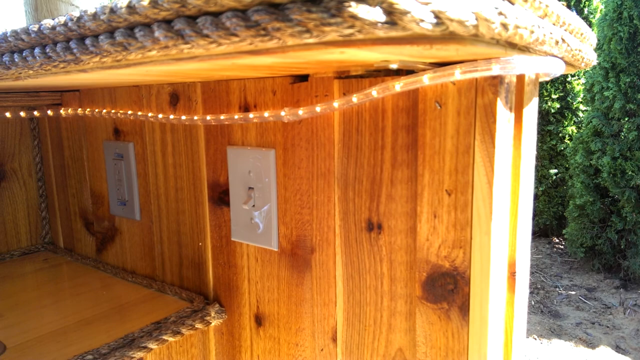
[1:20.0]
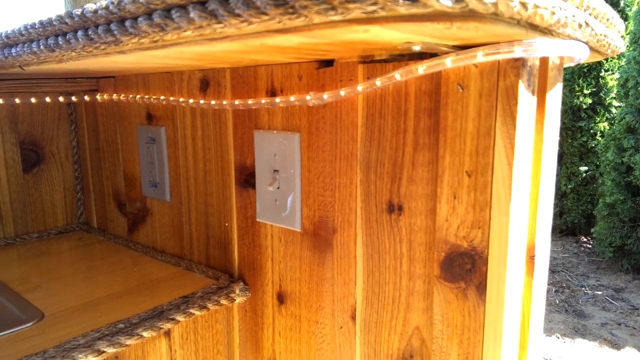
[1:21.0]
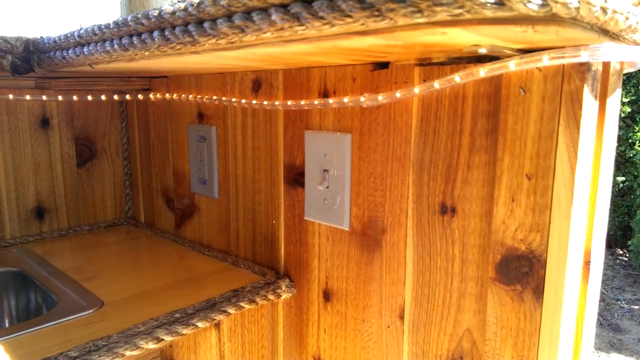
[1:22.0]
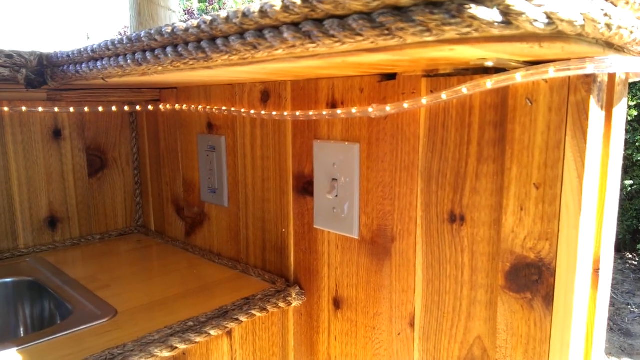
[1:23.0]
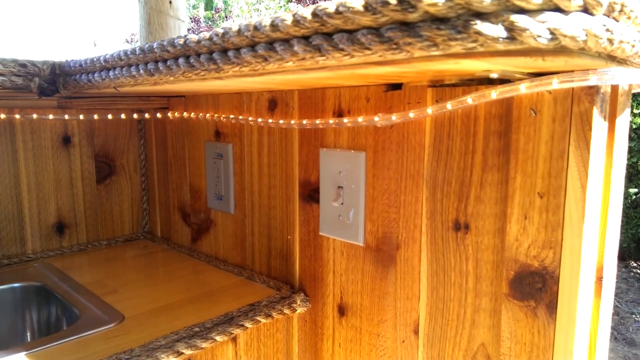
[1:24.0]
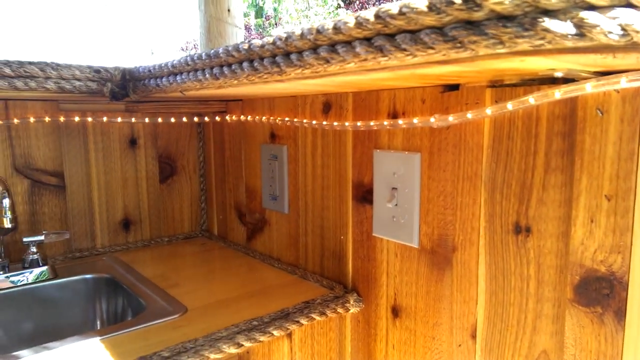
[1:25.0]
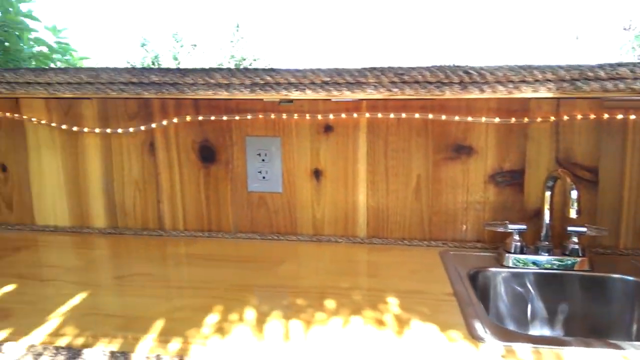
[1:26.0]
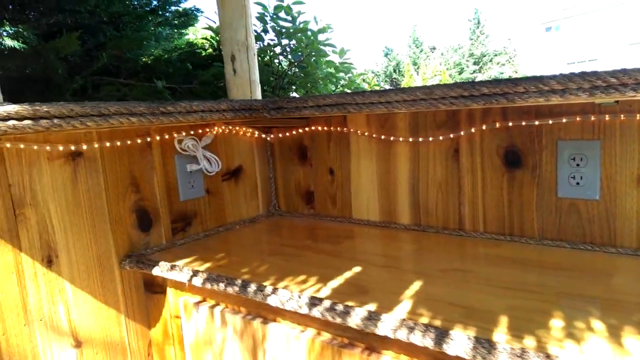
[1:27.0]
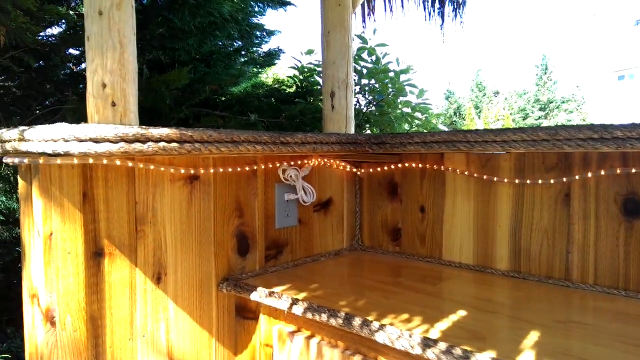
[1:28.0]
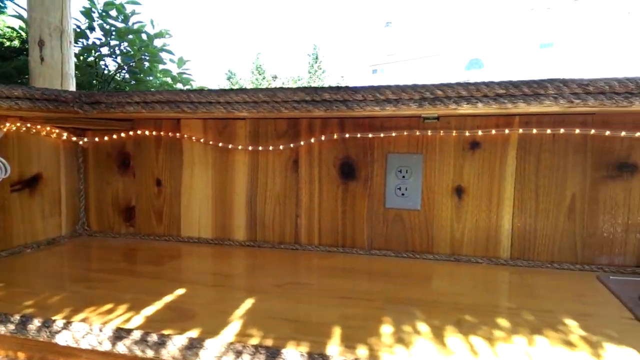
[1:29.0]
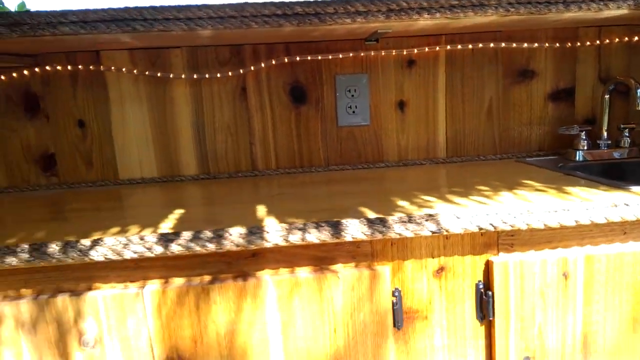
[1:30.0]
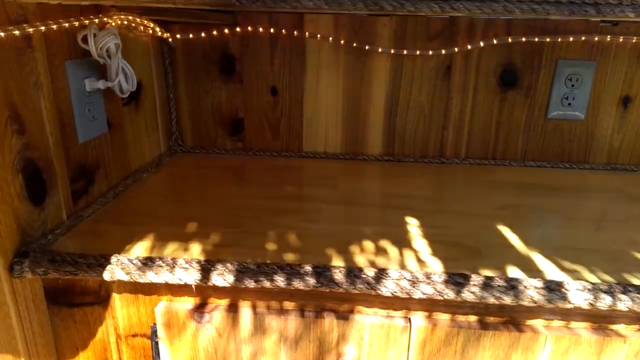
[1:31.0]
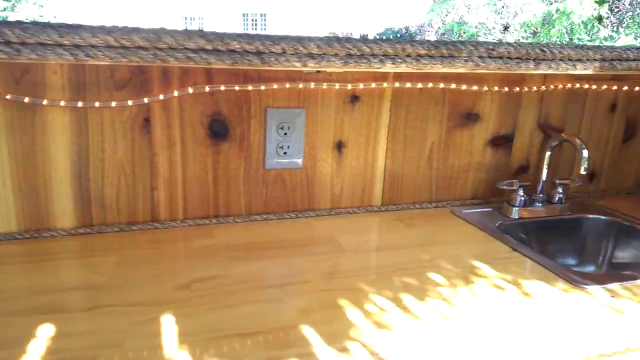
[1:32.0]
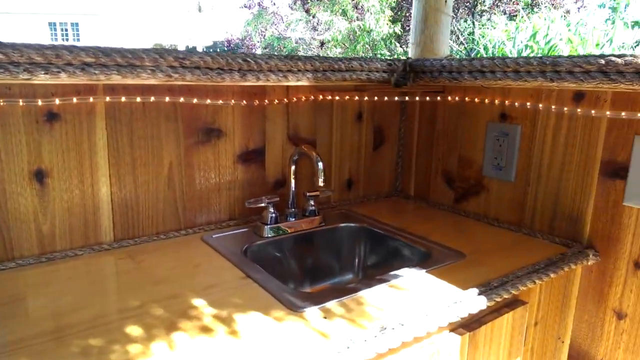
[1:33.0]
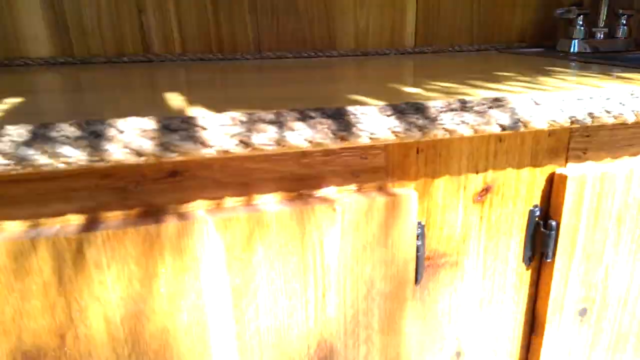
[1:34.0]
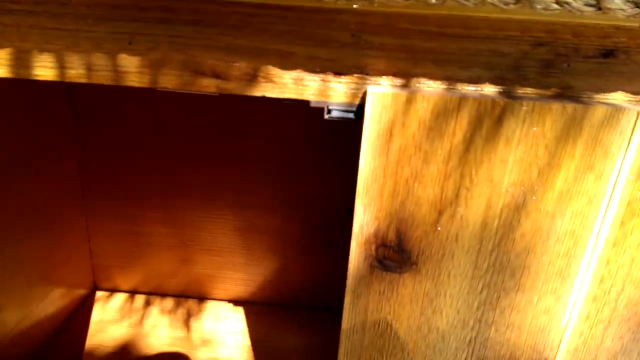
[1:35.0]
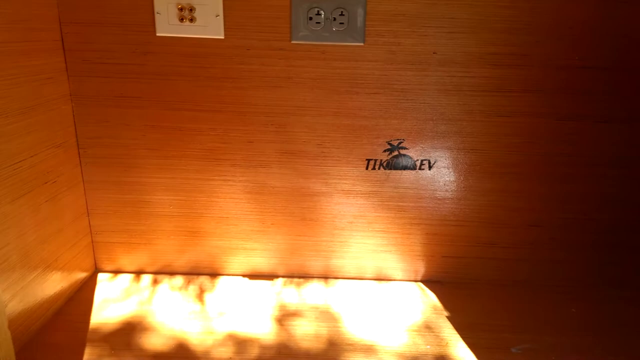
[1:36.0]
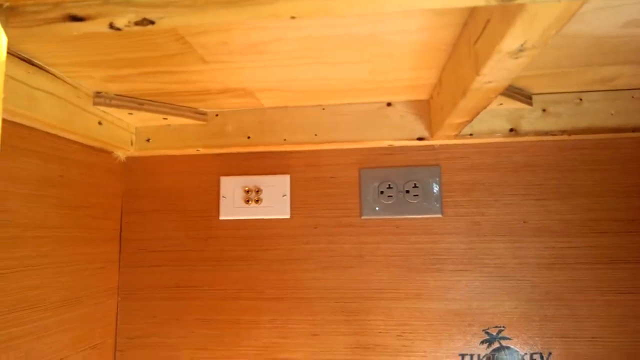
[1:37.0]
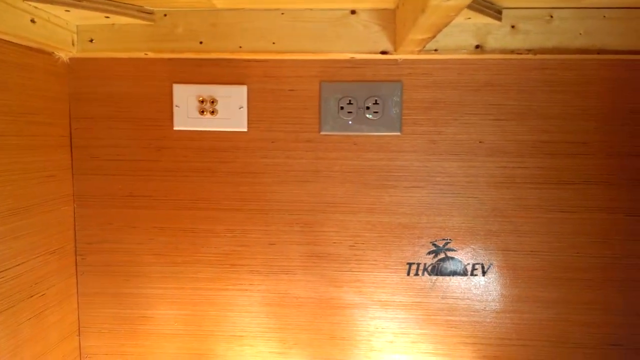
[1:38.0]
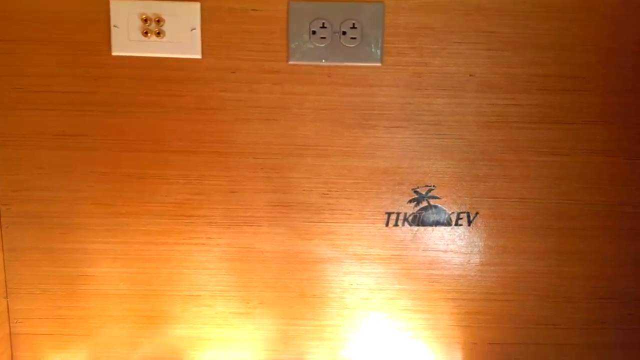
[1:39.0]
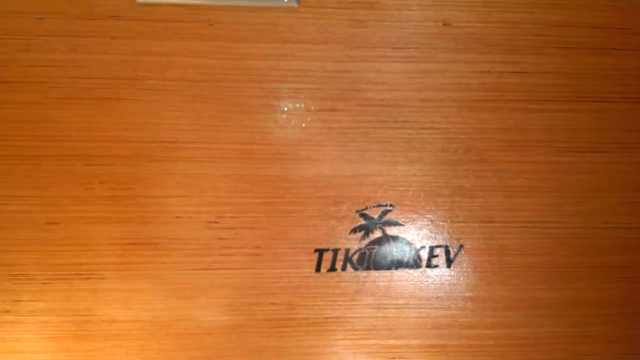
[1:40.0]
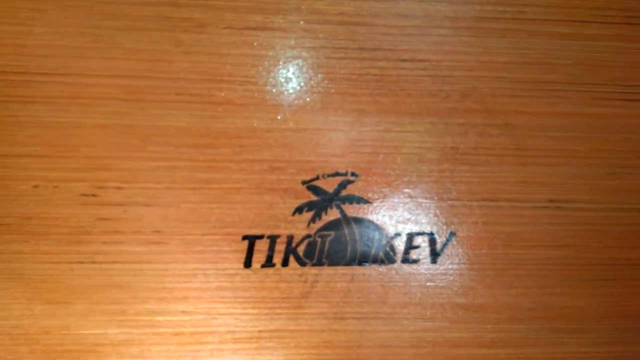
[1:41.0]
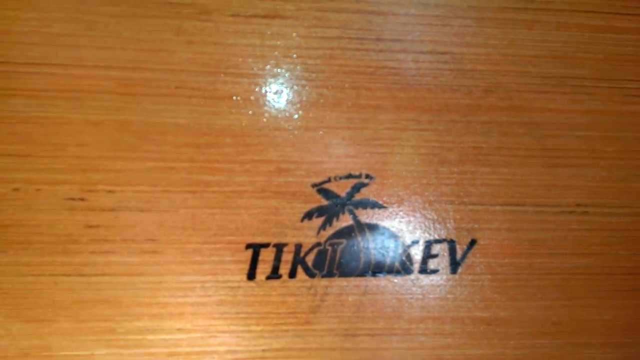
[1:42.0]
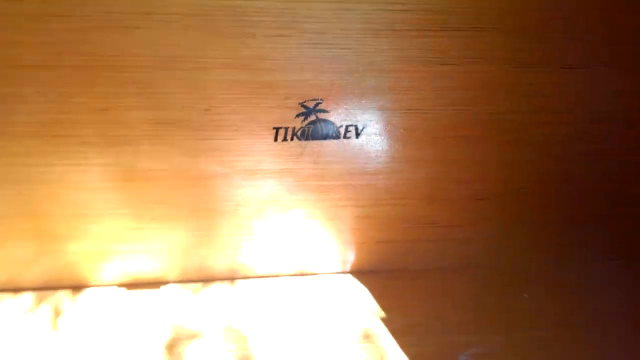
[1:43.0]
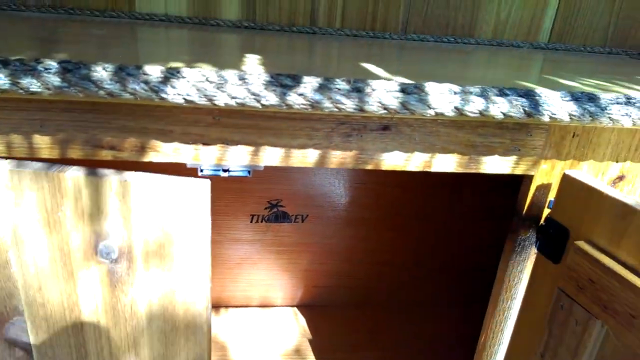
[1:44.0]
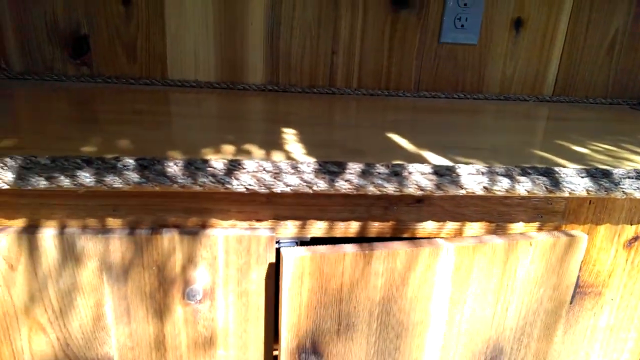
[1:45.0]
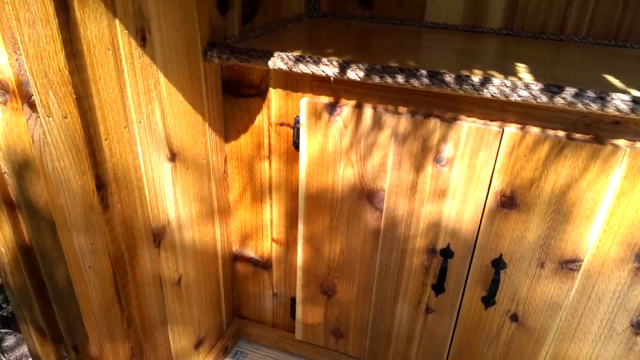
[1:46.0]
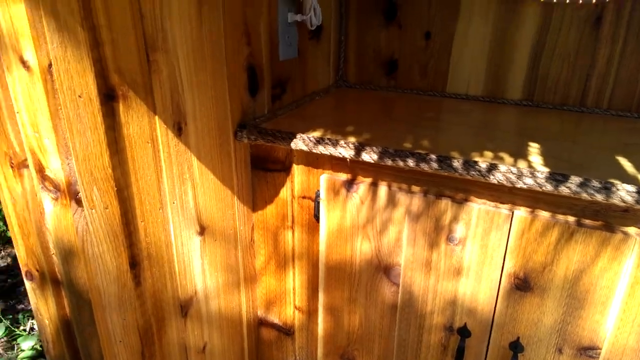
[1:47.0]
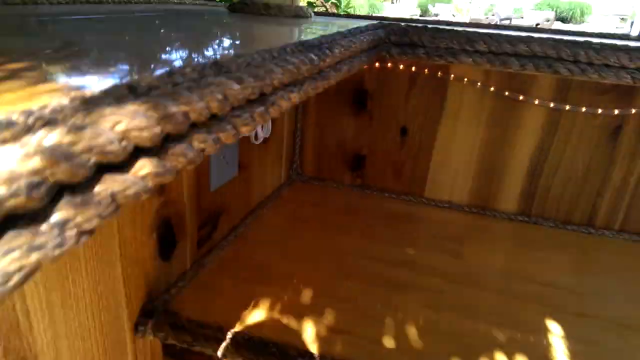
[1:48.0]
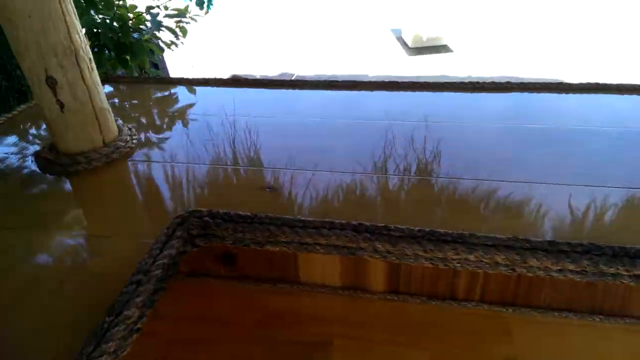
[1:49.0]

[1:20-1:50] The inside of a wooden structure shows wood panels and what looks like two light switches on the right side. There is a small ledge inside that looks like it is meant for storing items. As the camera pans to the left, the ledge turns out to be a countertop inside the wooden structure, with a stainless steel sink and faucets installed on it. There is an electrical outlet with two sockets, and as the camera pans further left, one more electrical outlet and a small pipe. A slender, pipe-like light decoration with tiny shining lights trims the inside. The camera pans to the right again and focuses on the sink area, then the wooden cabinets below are opened. Inside the cabinets are more electrical outlets and what looks like an imprint showing the words "Tiki Kev" with the outline of what looks like a palm tree on a half circle. The camera focuses on the imprint for a better view. The cabinet doors are closed, and the camera pans upward again to show the countertop.